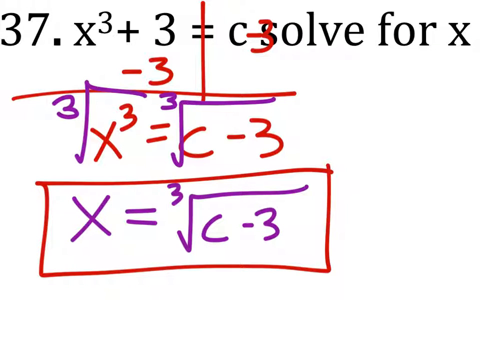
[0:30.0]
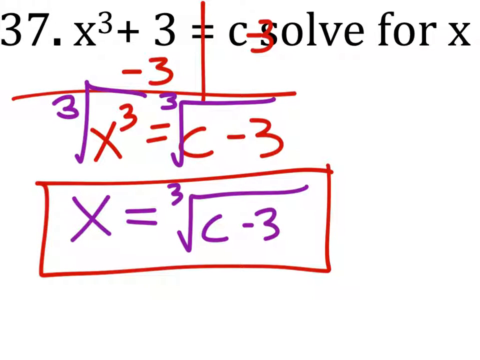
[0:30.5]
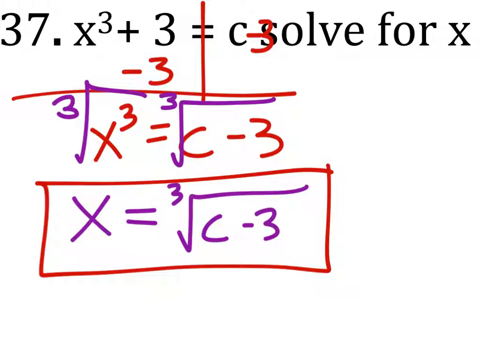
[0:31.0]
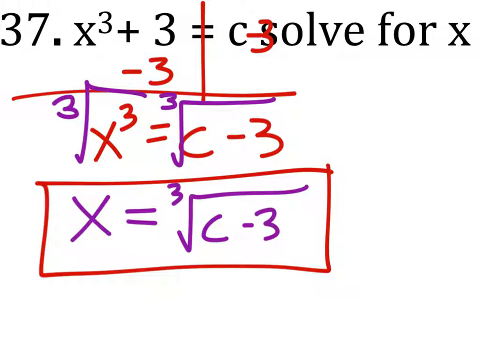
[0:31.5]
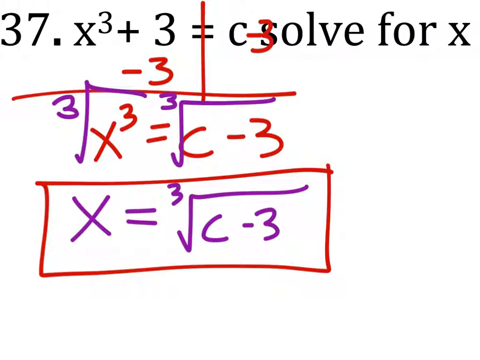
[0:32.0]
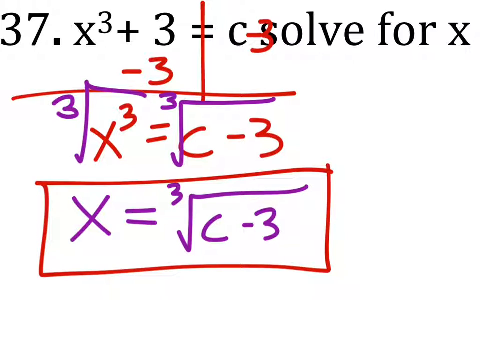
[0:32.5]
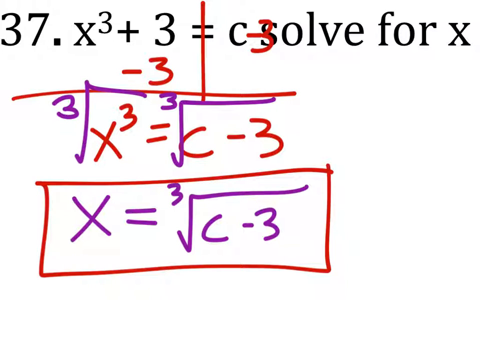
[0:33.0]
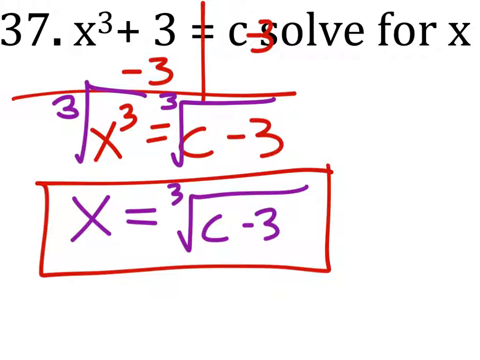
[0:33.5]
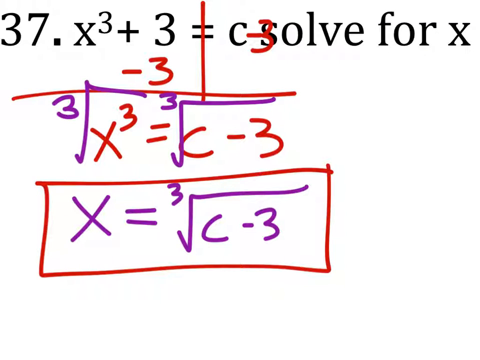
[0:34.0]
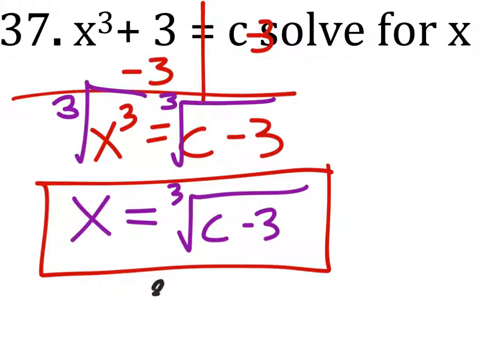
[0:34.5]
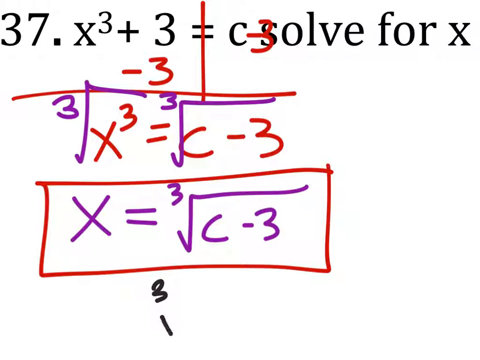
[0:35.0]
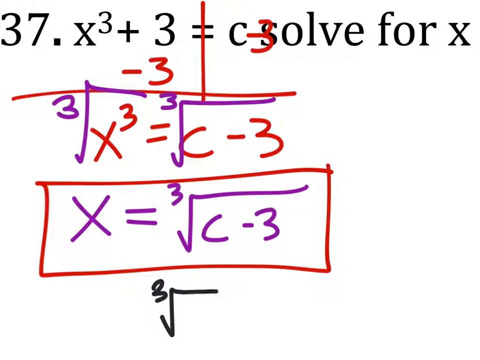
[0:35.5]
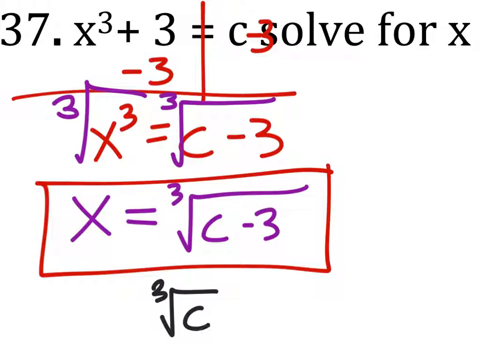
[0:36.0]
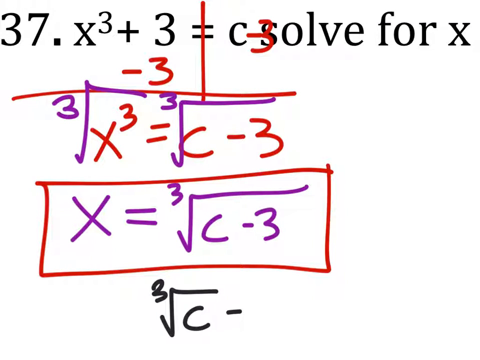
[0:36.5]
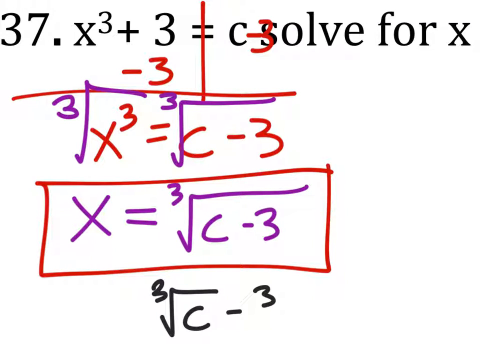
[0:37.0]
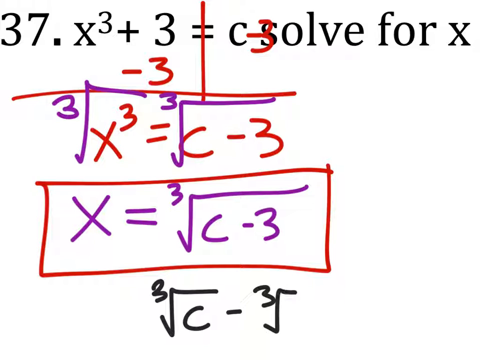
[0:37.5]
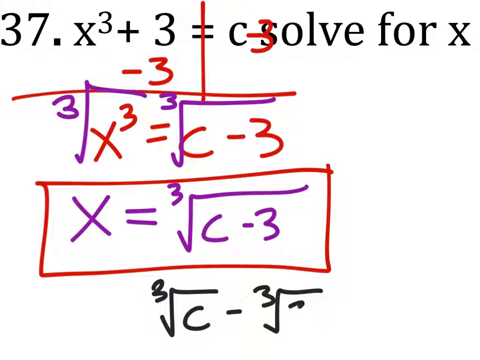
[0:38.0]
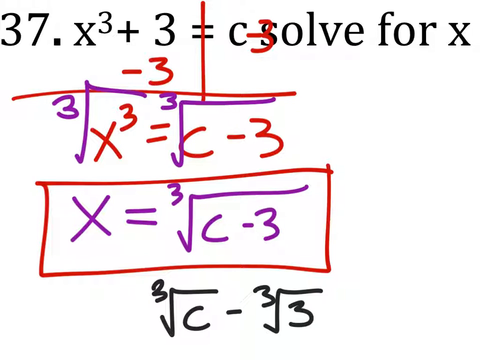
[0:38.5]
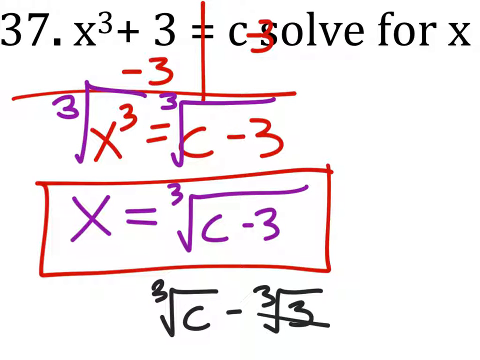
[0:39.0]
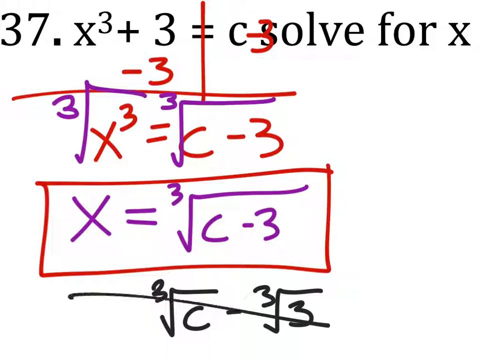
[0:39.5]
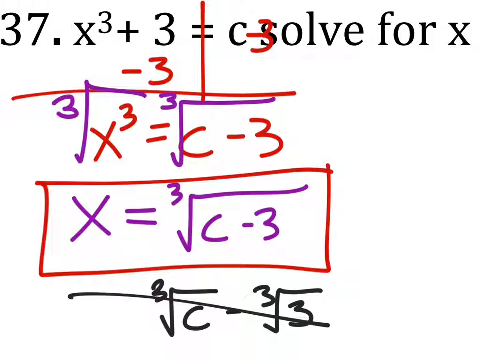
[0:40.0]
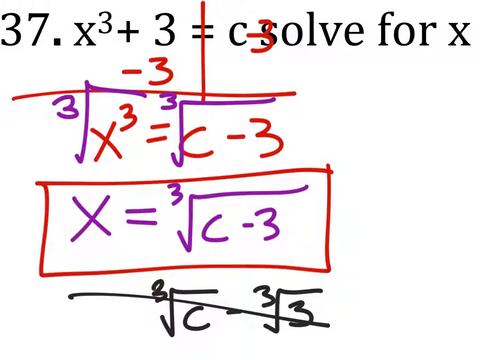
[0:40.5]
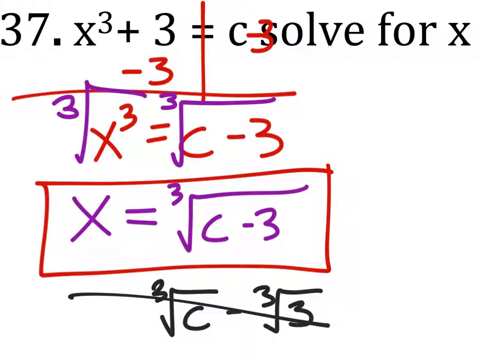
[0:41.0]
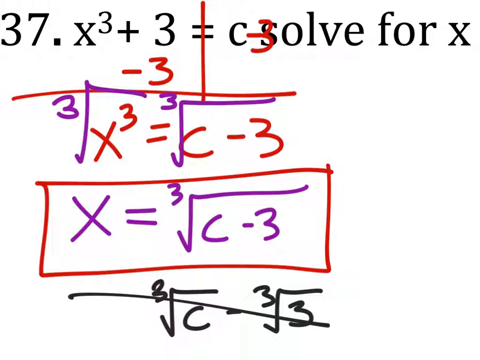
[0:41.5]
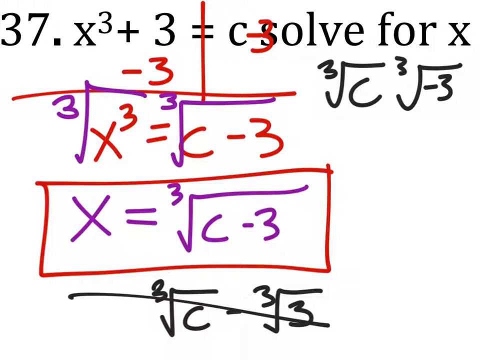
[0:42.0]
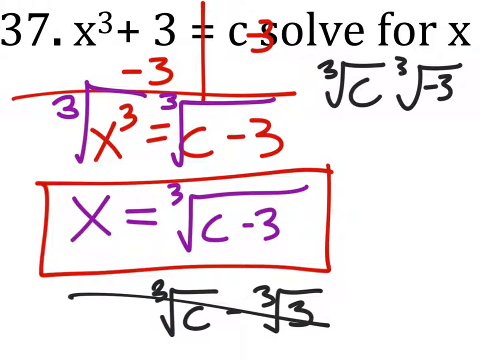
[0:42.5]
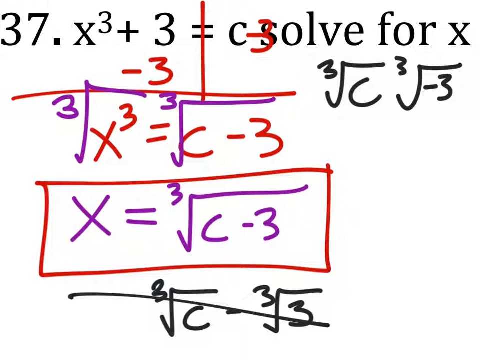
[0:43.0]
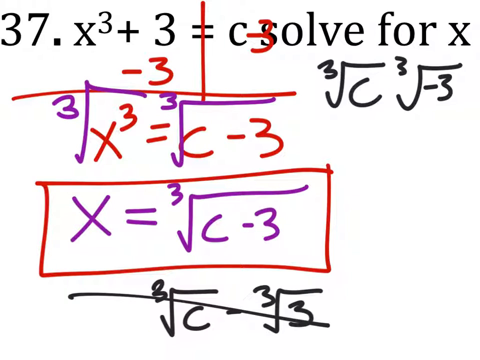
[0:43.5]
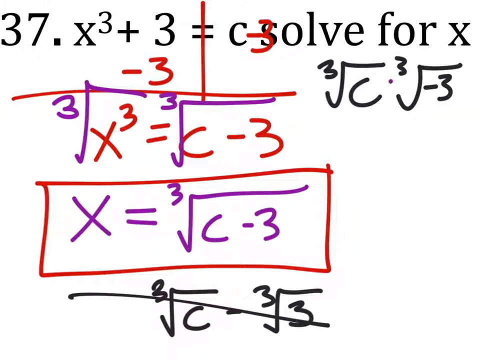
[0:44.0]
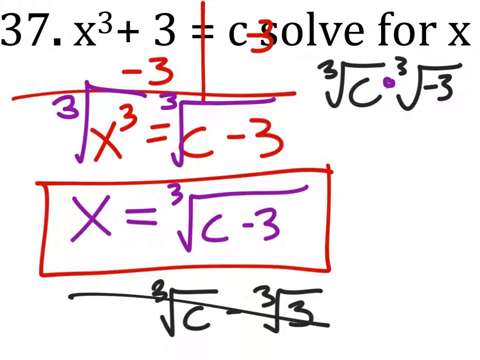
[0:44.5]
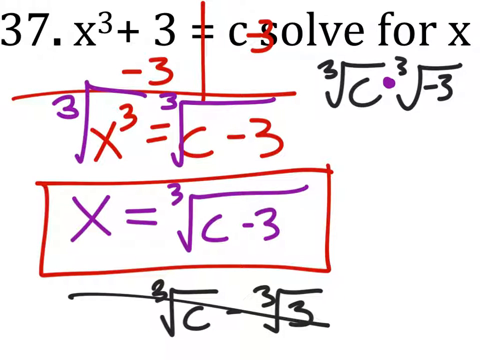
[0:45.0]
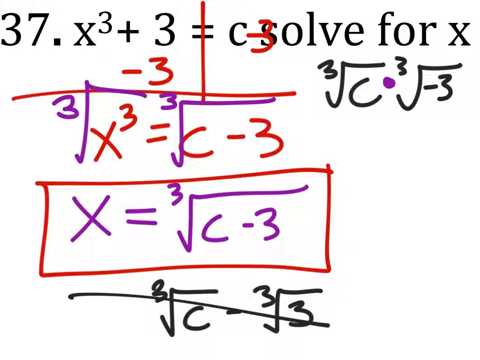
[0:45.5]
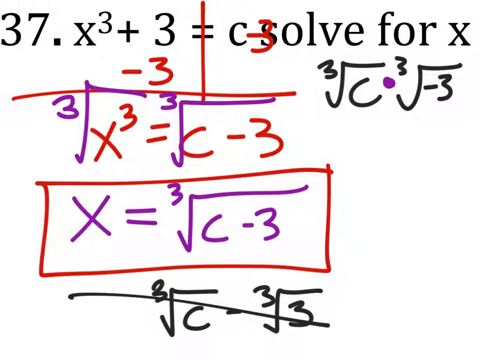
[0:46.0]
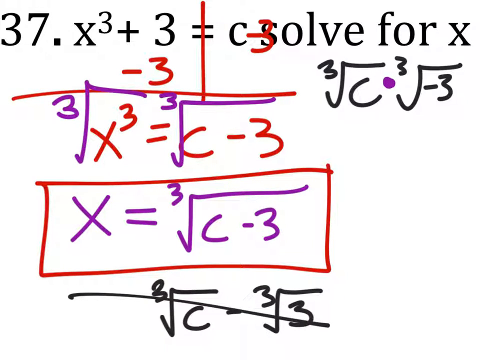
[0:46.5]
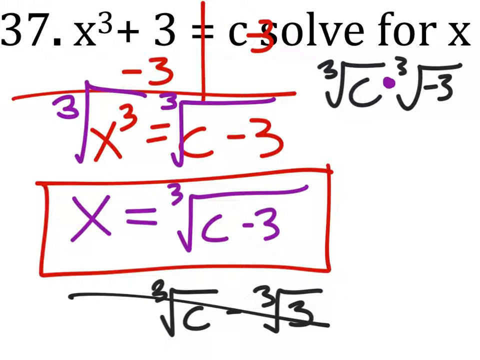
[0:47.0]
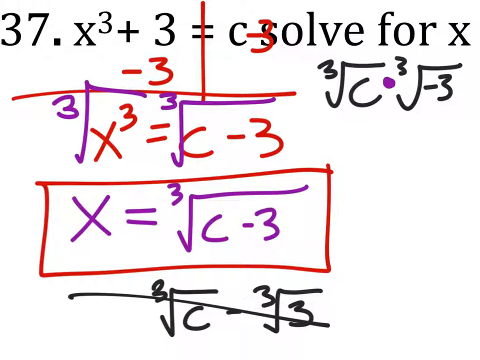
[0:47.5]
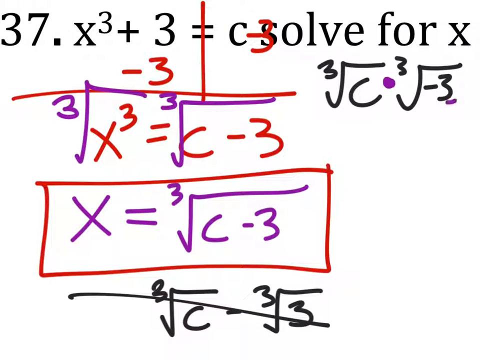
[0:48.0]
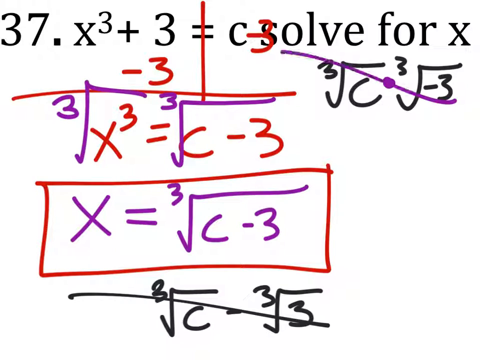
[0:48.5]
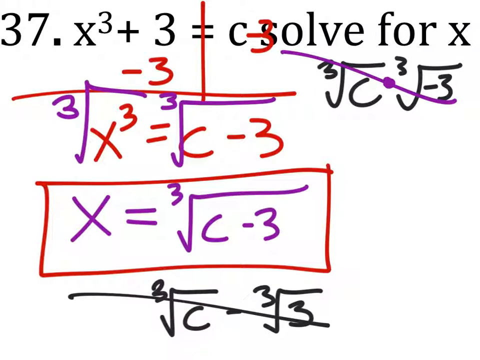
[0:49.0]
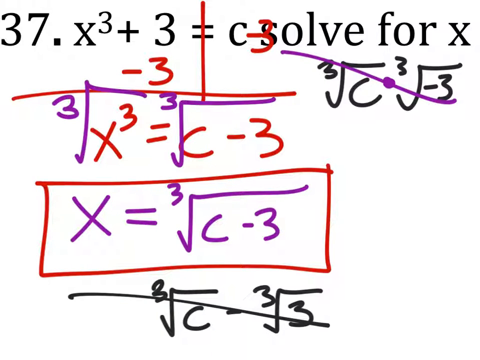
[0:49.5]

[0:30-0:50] The result x equals the cube root of c minus 3 is shown. It is noted that the cube root of c minus 3 is not the same as the cube root of c minus the cube root of 3, and that it is also not the same as the cube root of c times the cube root of minus 3, since neither follows the basic principles of mathematics.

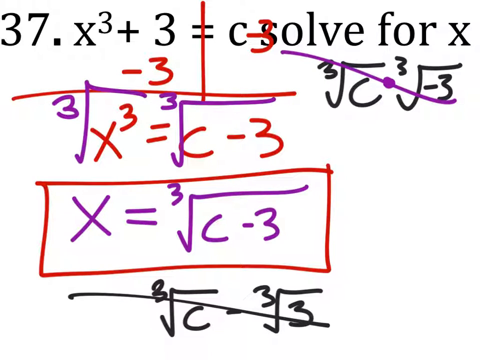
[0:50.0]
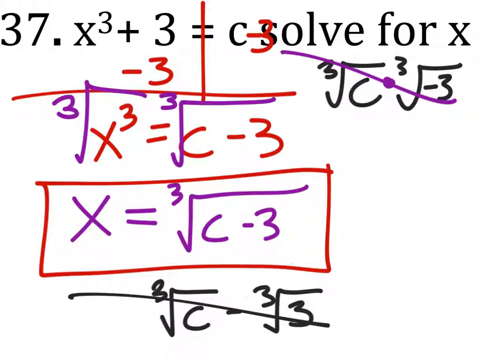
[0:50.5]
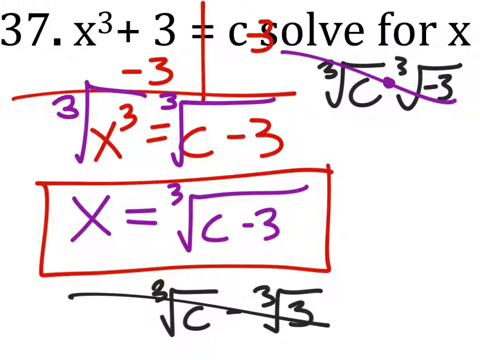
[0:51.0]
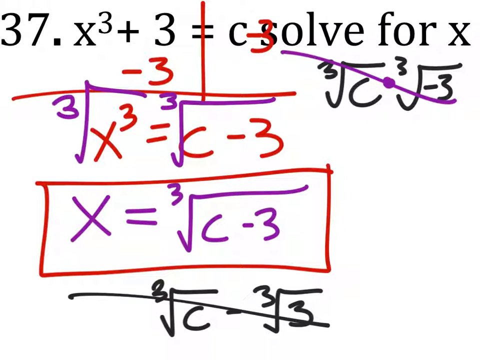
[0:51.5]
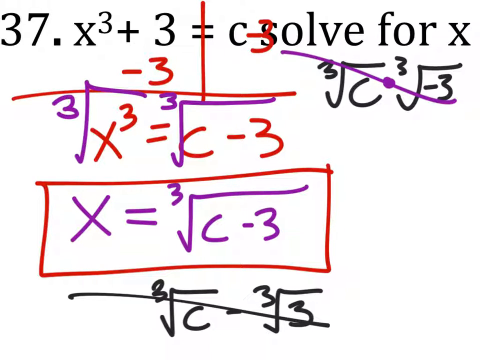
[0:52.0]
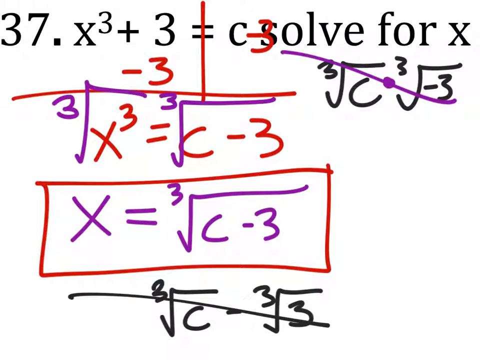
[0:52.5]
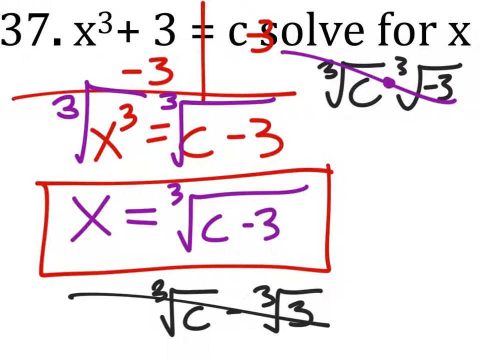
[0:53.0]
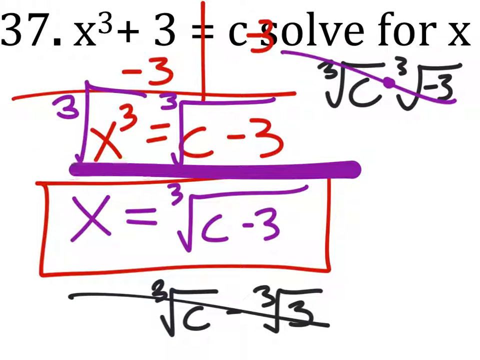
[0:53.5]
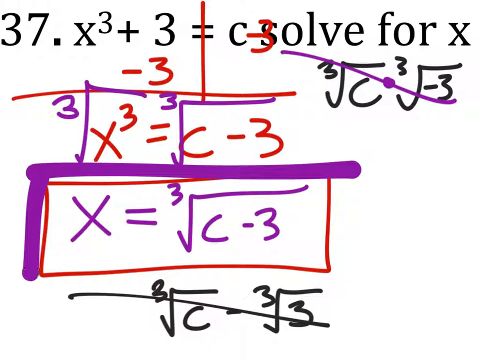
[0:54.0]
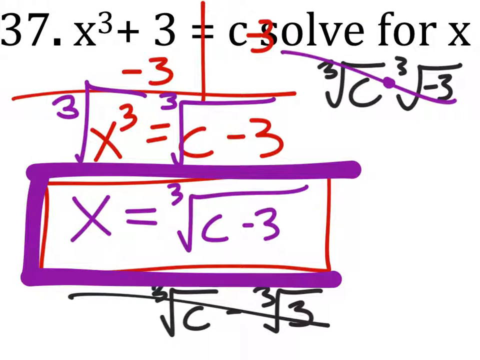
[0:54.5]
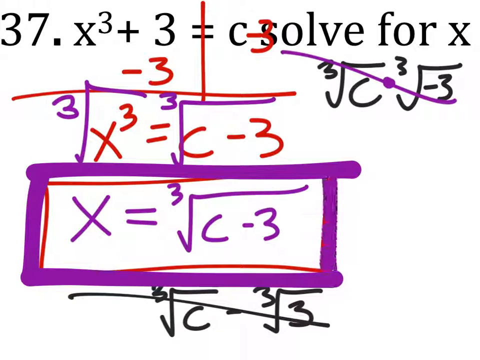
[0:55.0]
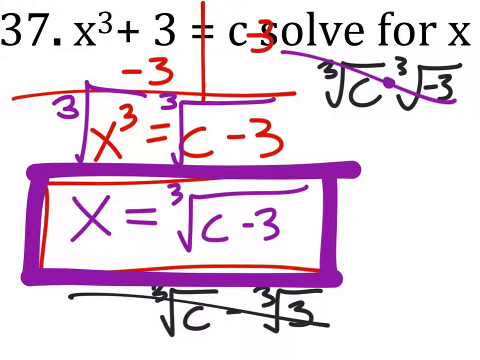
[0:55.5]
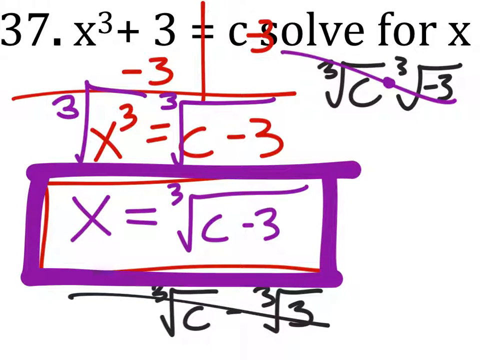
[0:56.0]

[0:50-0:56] The expression x equals the cube root of c minus 3 cannot be reduced any further, so it stands as the last step and the final answer to the equation x cubed plus 3 equals c.